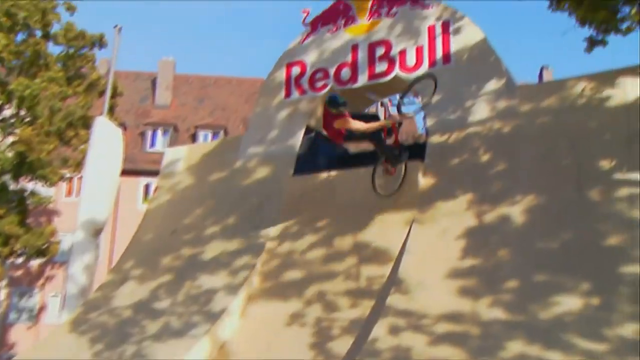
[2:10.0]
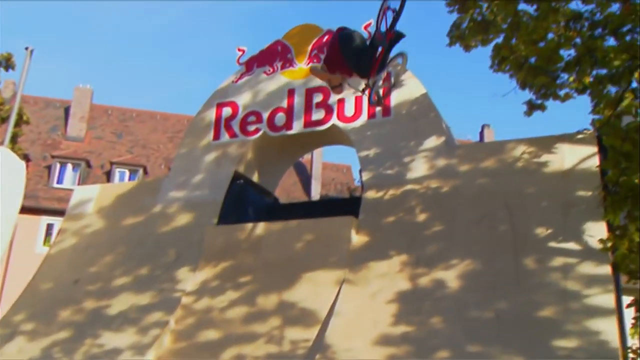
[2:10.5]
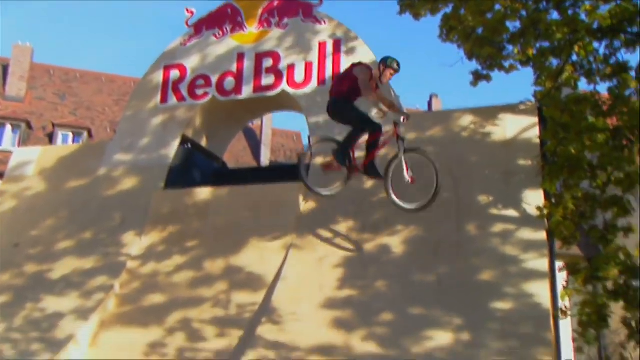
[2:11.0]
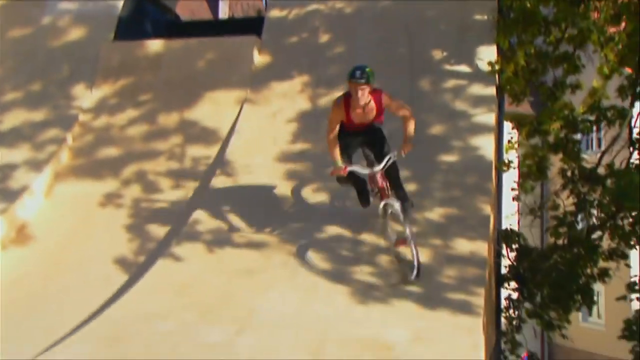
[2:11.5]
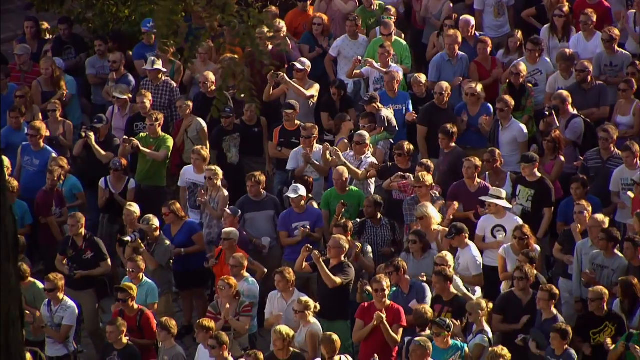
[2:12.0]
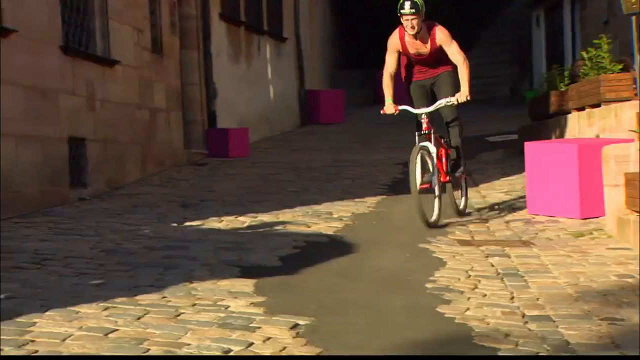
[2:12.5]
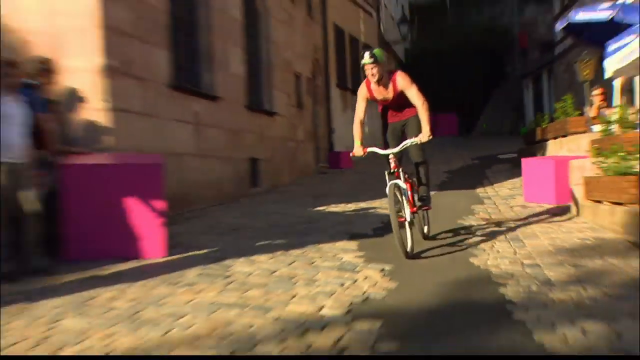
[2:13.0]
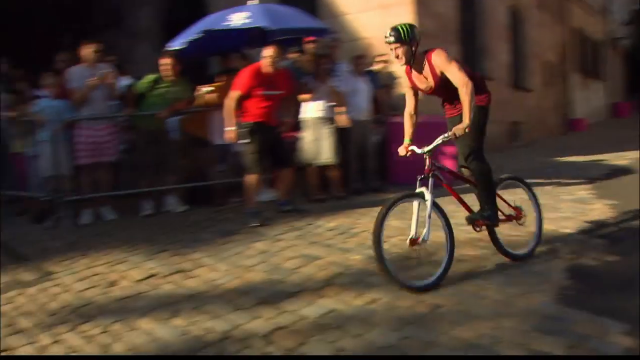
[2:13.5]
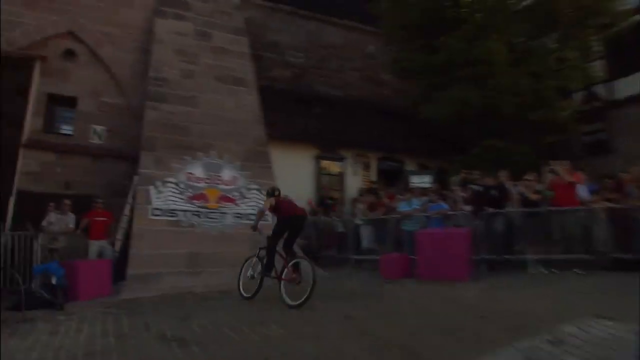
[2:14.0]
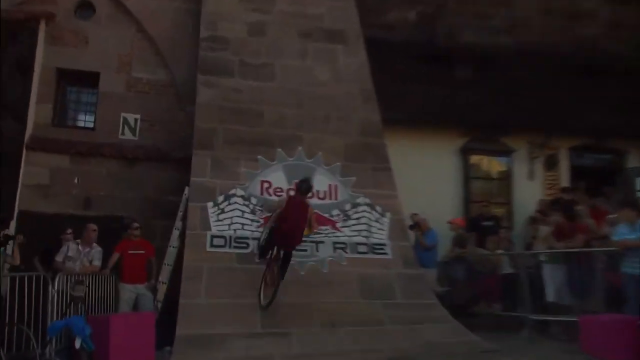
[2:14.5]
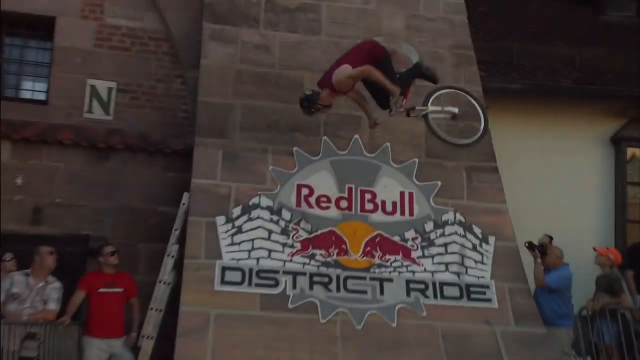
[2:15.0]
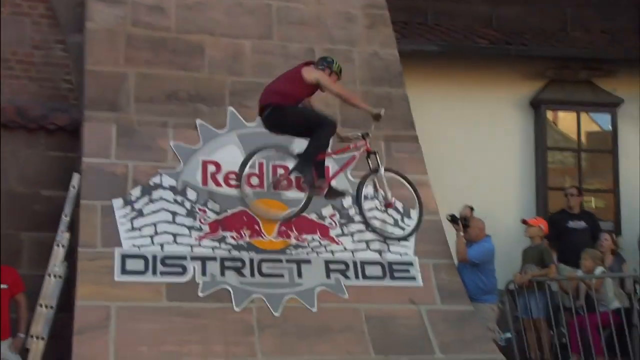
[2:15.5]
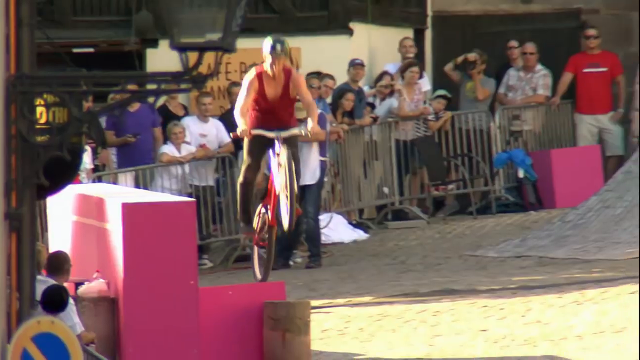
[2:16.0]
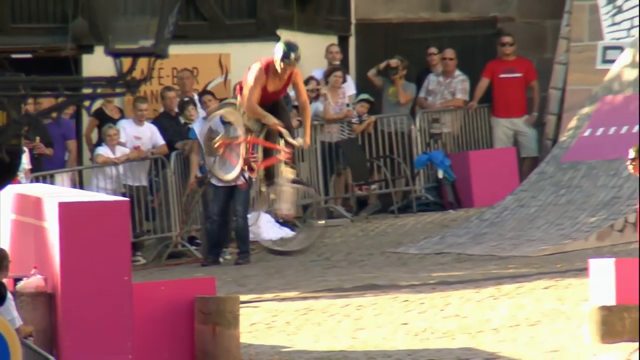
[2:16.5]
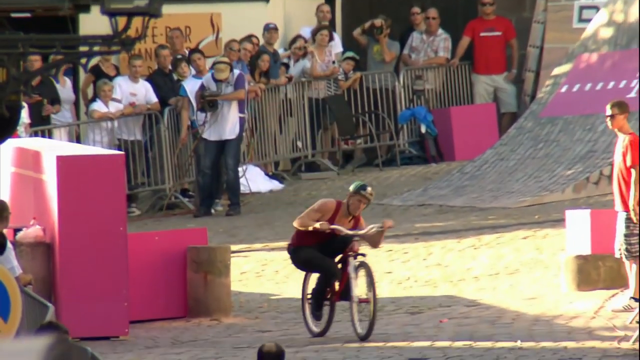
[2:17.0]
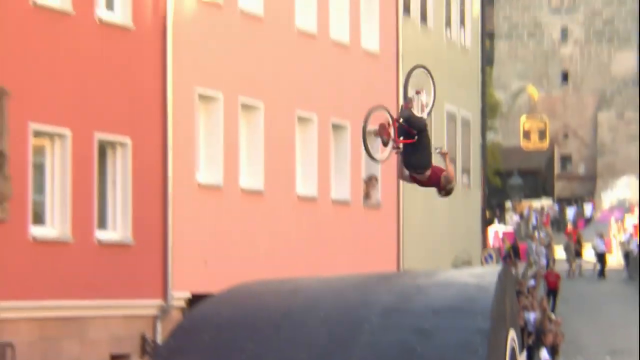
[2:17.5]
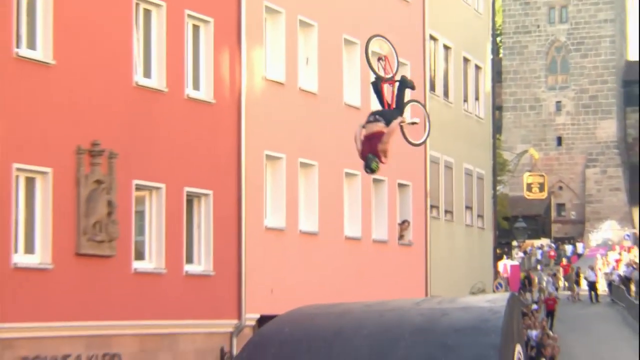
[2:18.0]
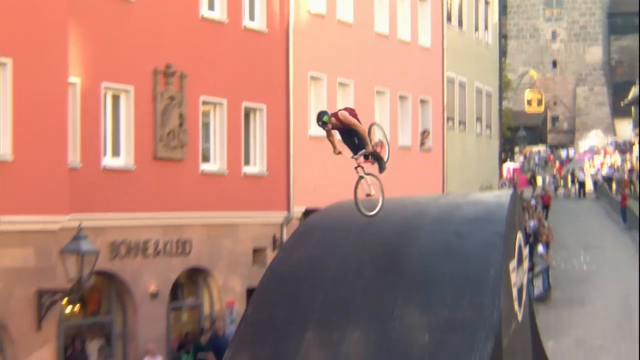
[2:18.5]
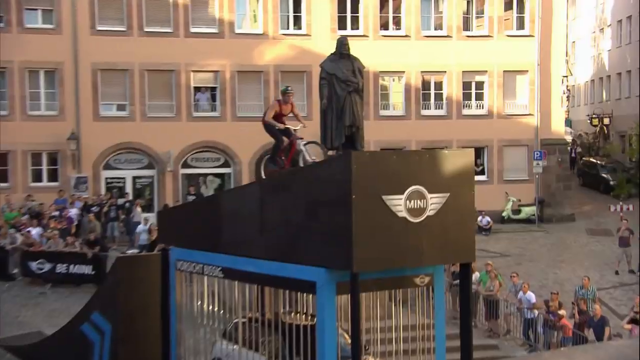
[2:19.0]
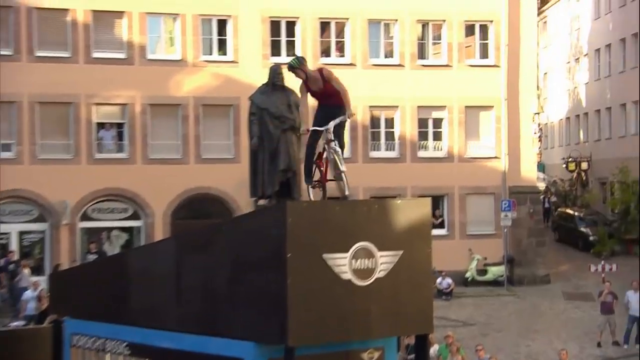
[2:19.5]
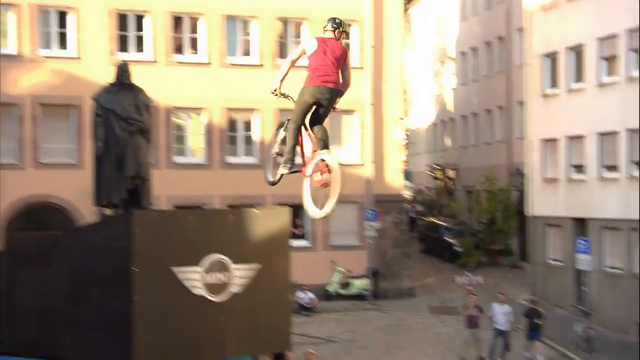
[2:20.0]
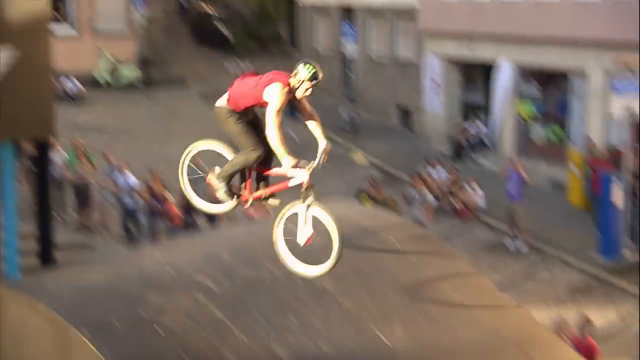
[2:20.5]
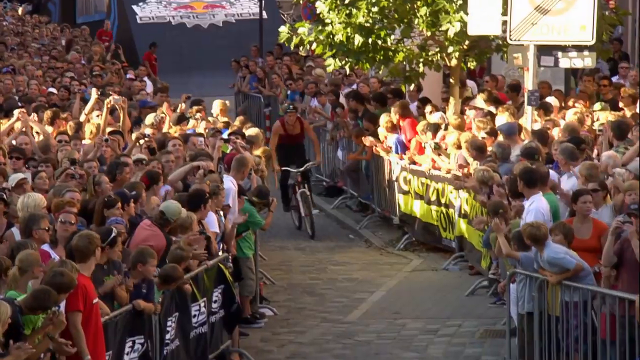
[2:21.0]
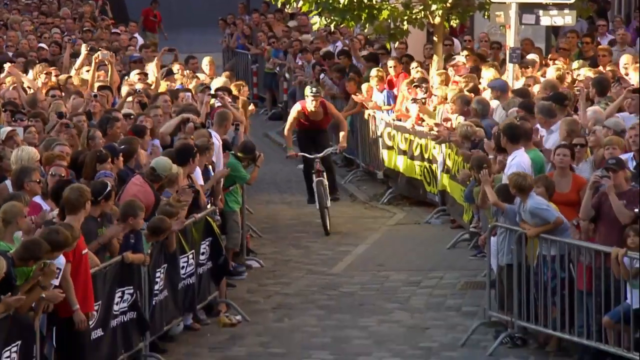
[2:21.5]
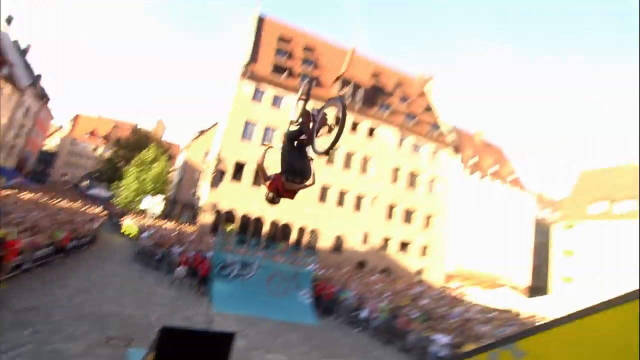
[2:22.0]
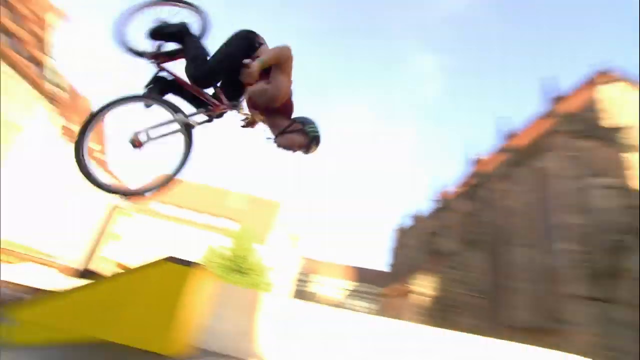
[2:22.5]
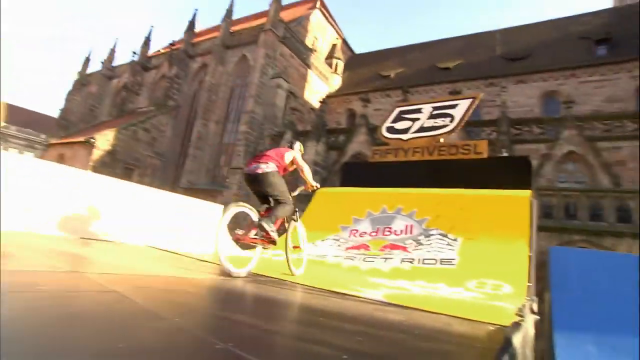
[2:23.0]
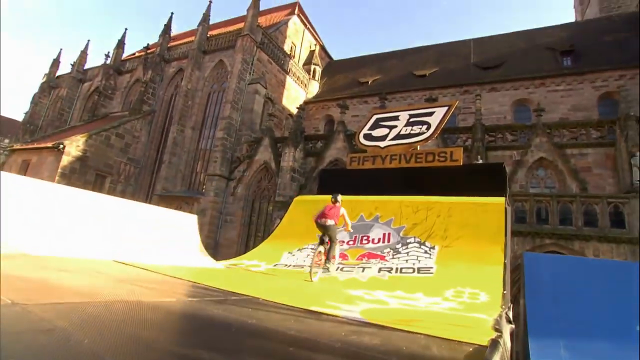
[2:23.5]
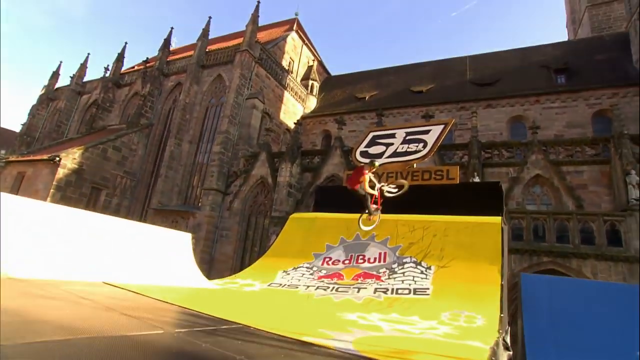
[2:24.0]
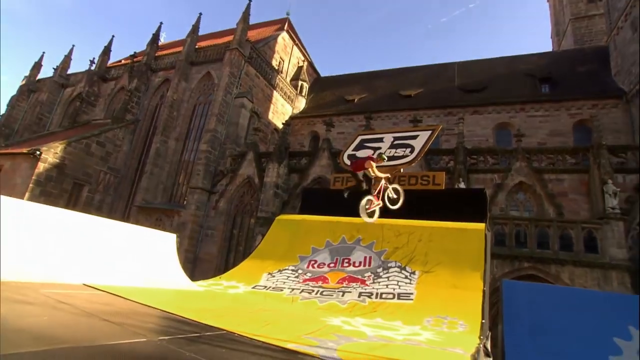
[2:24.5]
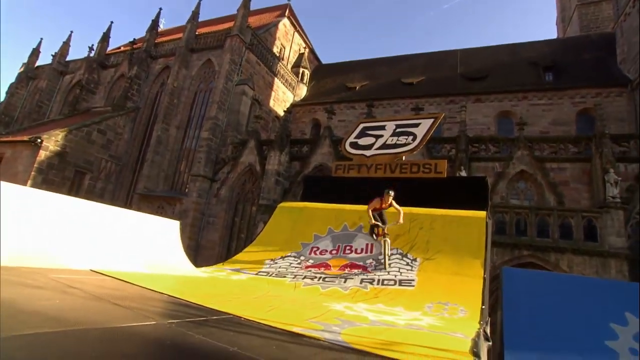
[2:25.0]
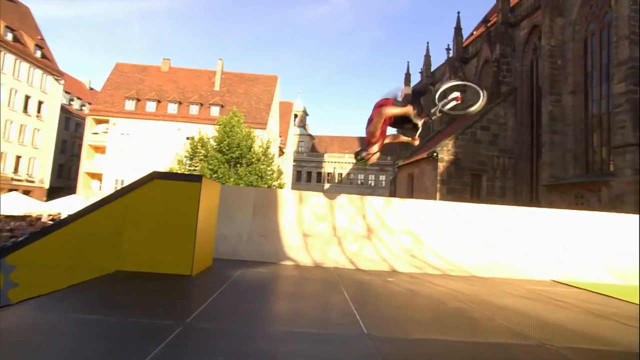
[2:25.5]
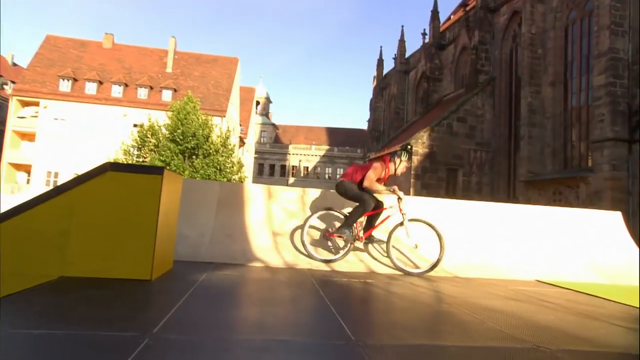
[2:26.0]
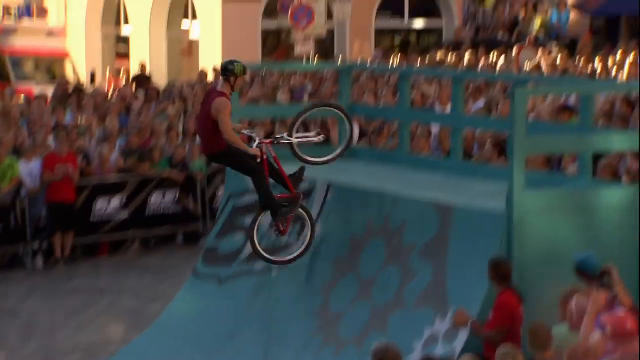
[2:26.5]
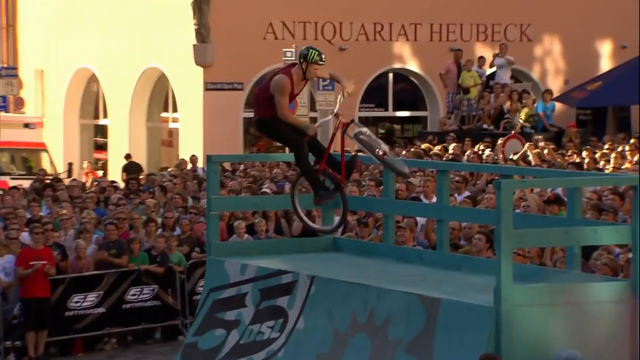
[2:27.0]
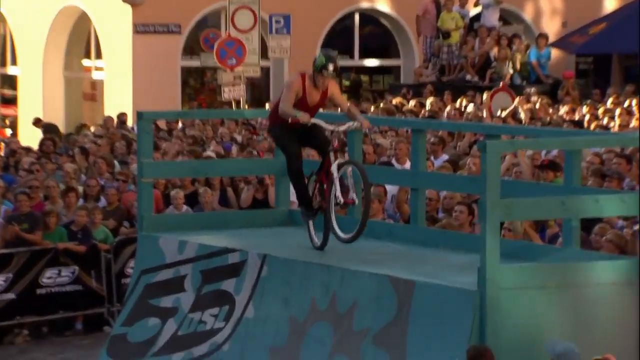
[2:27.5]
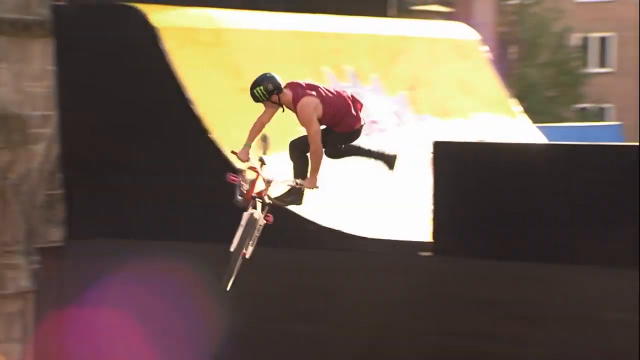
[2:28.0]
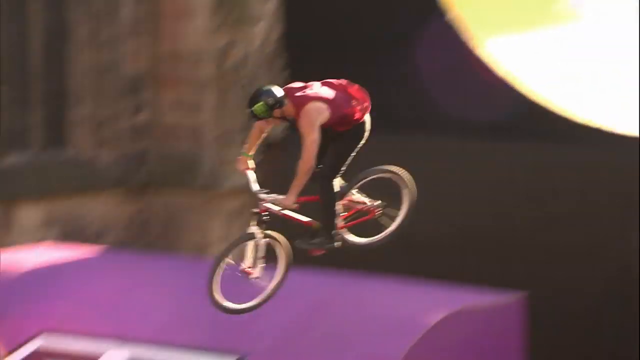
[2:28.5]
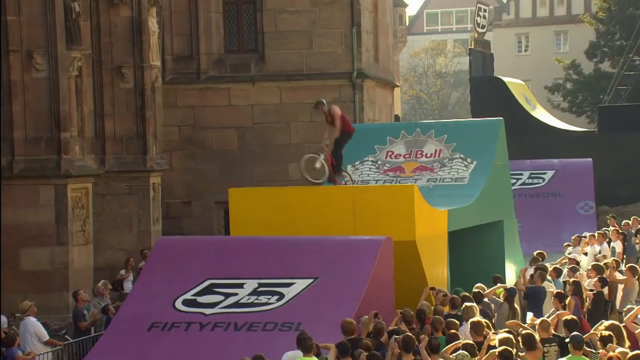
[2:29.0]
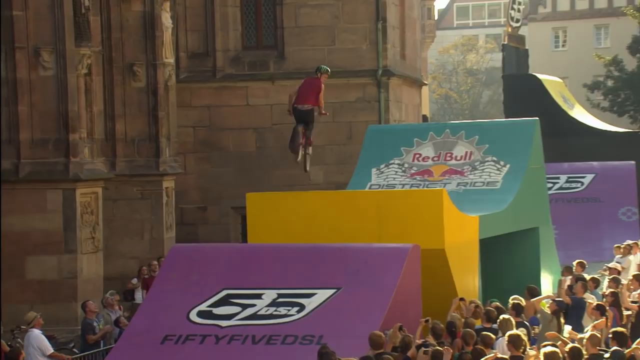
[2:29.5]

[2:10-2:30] Outdoors on a sunny day, bicyclists do stunts for a crowd right within a city. Many of the ramps are placed in the center of roads and walkways, so the crowd can stand in the area and watch live. Some bicyclists use small ramps, going back and forth and doing little flips, while others are much higher up on much steeper ramps doing flips and spins. Sometimes they flip the whole bike while seated on it, and other times they fly through the air just holding on to the handlebars. All the riders wear helmets.